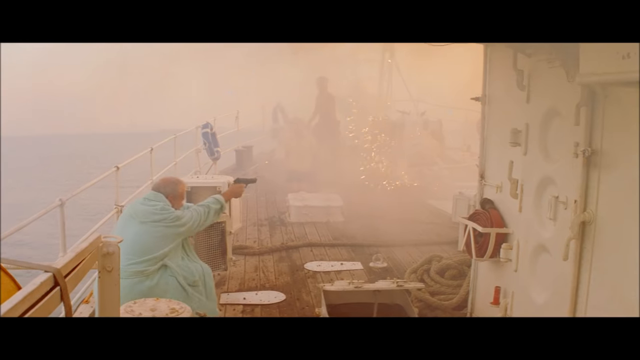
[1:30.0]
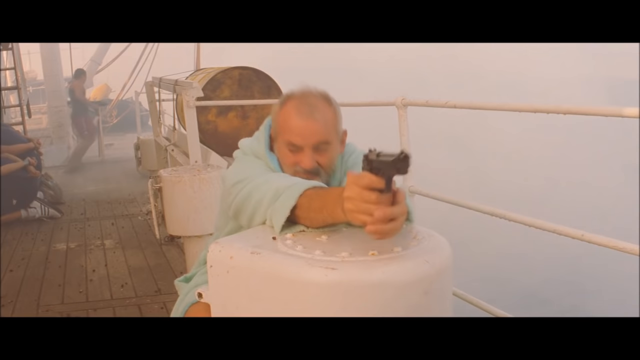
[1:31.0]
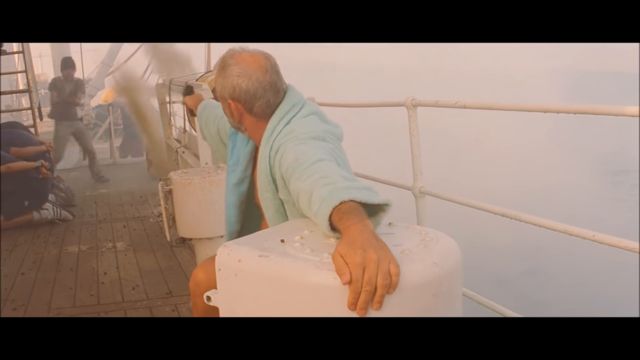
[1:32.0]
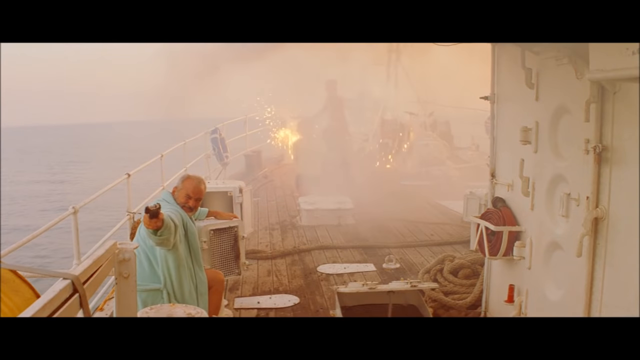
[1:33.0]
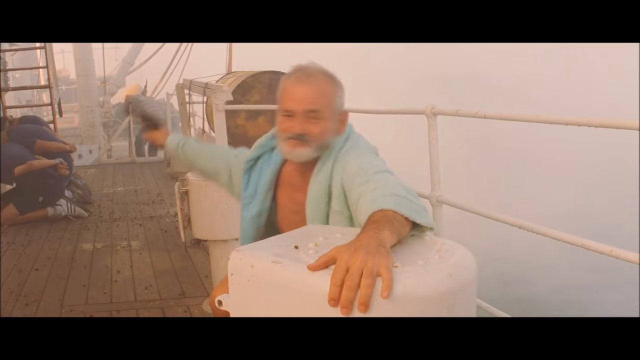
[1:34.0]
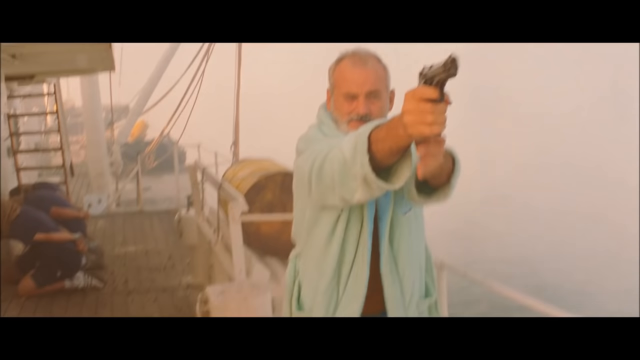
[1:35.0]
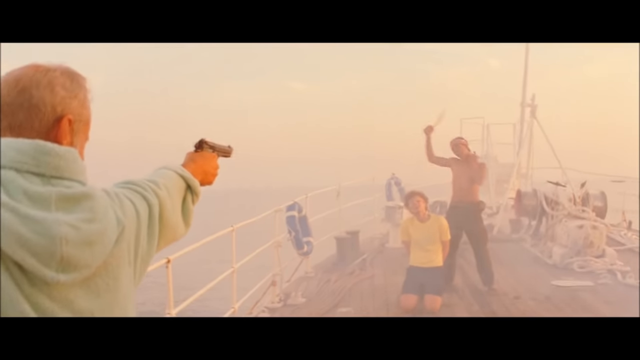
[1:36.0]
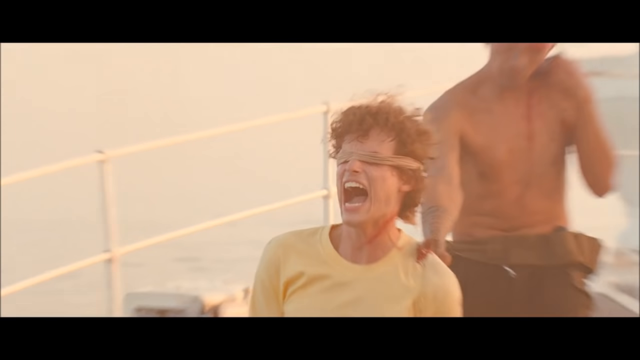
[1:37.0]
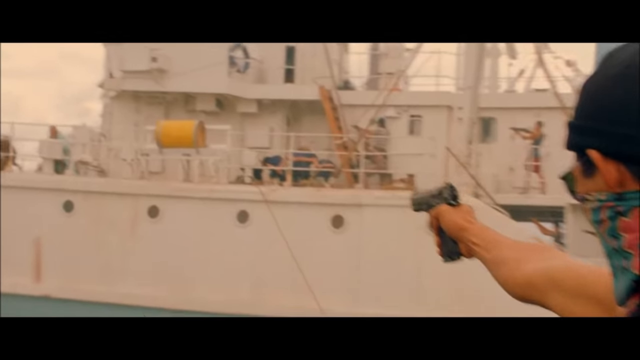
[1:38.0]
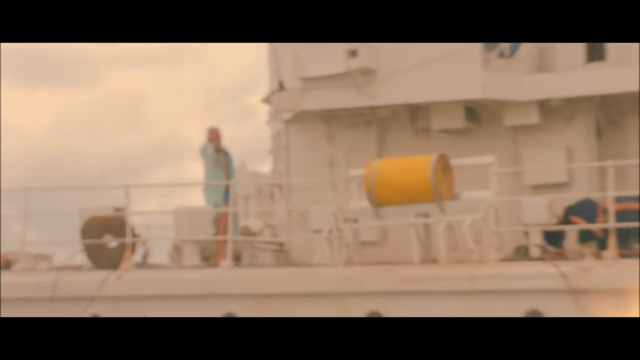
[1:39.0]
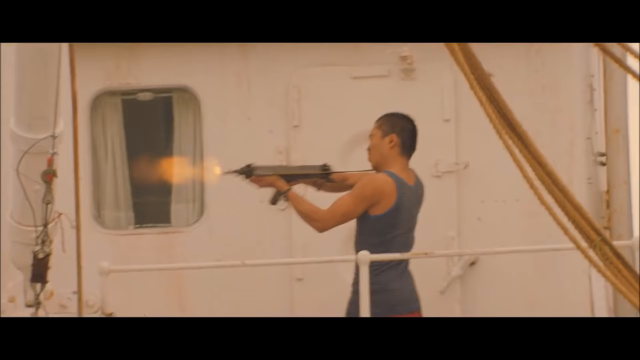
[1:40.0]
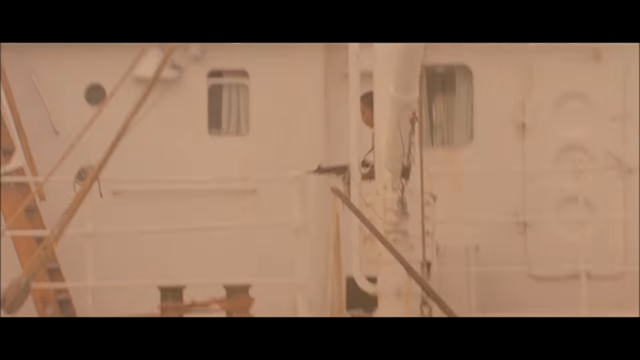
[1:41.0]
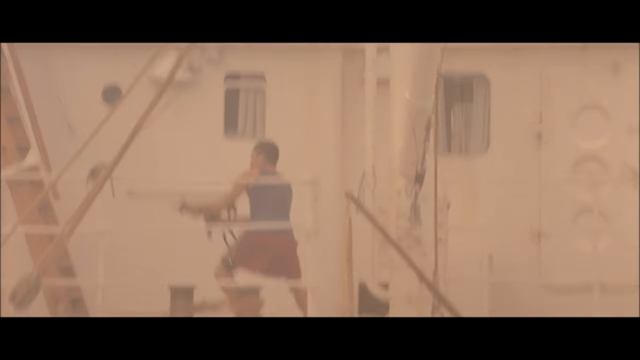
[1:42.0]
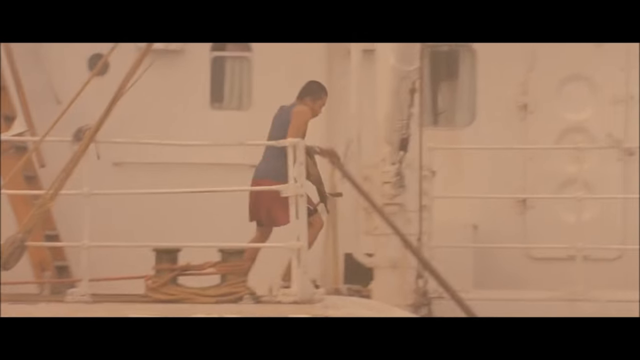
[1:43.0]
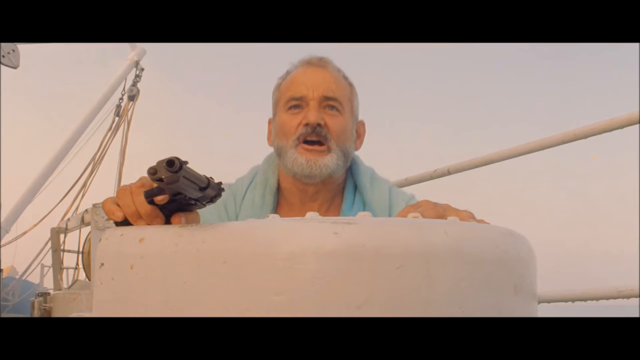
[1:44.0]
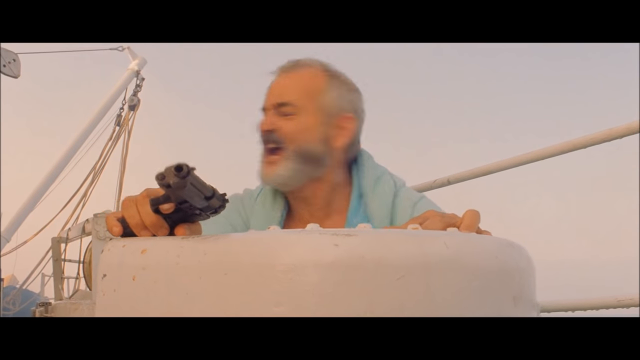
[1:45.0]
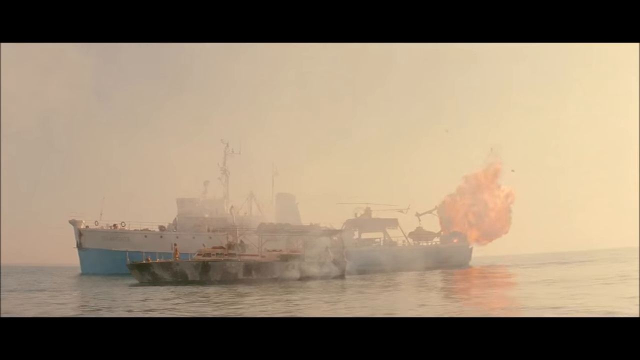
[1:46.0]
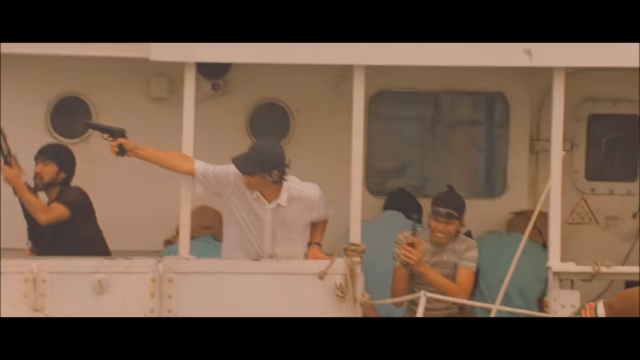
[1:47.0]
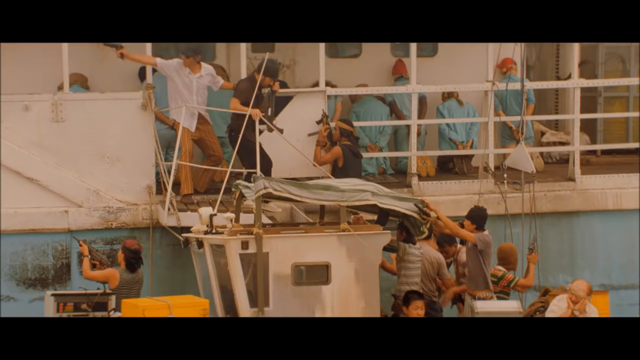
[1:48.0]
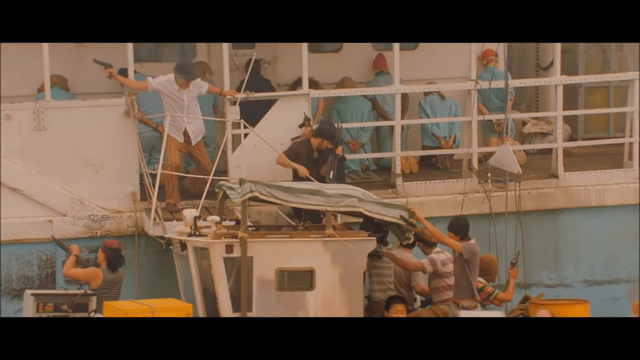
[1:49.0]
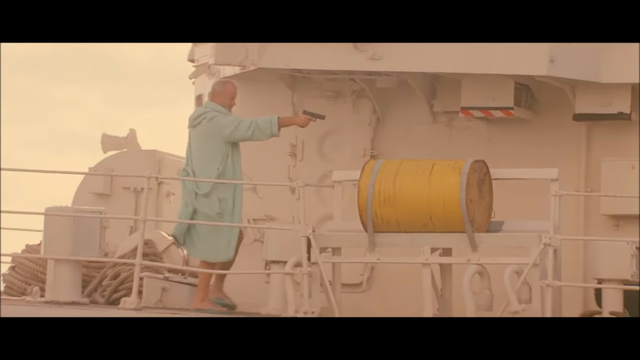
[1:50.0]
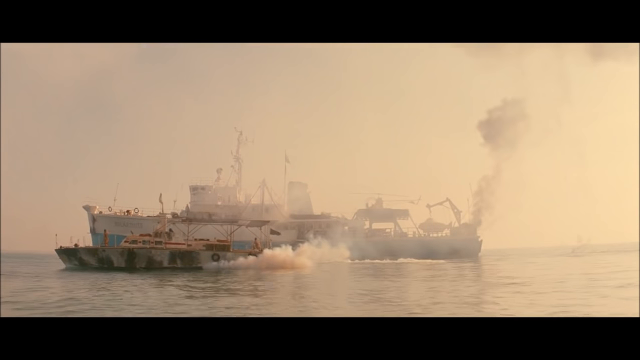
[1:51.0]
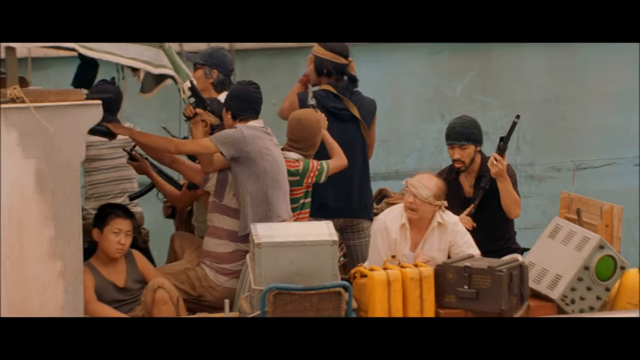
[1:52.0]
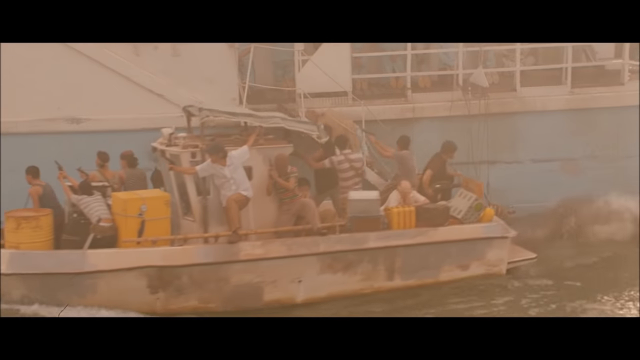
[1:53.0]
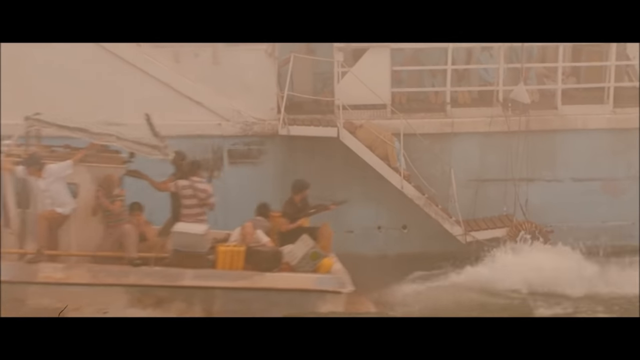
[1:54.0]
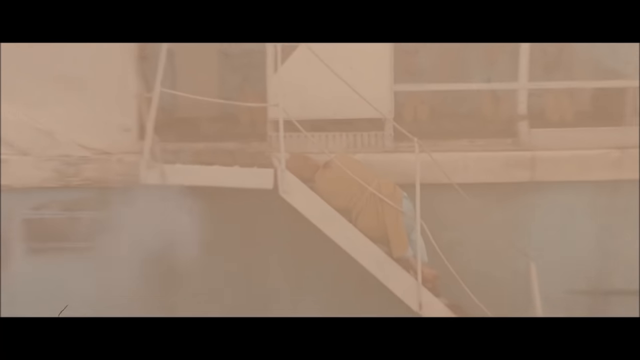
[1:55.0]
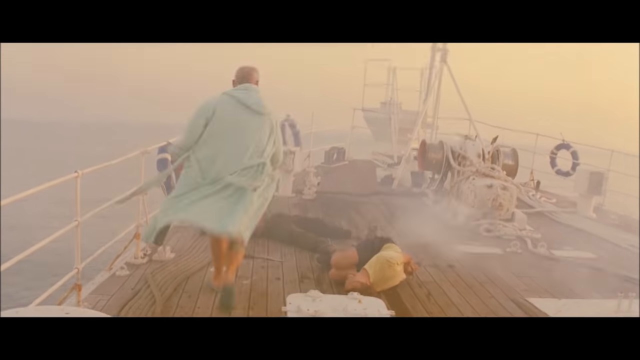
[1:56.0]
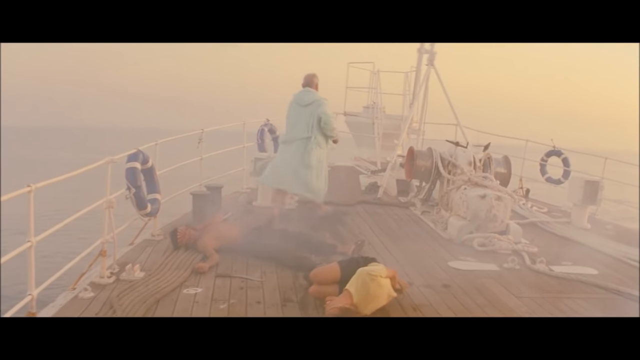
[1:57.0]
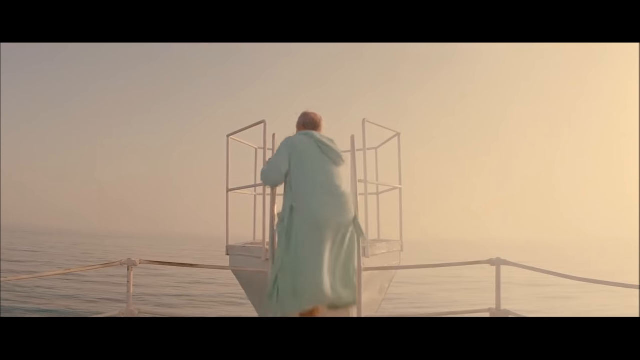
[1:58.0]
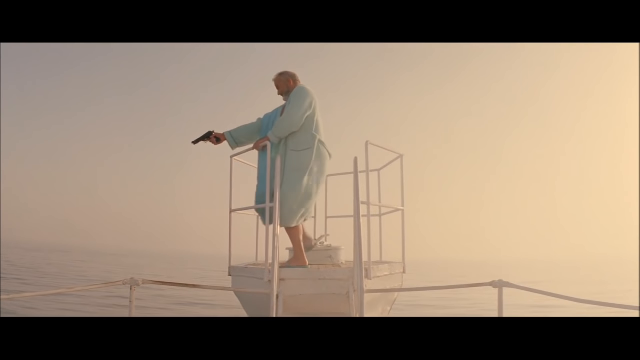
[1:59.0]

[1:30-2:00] Bill Murray, in his light blue robe, takes cover and shoots at the people kidnapping the crew on the boat. He shoots in front of him and also at someone behind him, and he clearly shoots a man in the neck, with blood pouring out. That man manages to dig a knife into the shoulder of a man from Bill Murray's crew, who screams. Bill Murray then shoots at men on another boat who shoot back at him, and another man appears and points a gun at Bill Murray from afar. Bill Murray starts screaming, an explosion occurs on one of the boats, and many people are pointing their guns at Bill Murray while he points his gun at them.